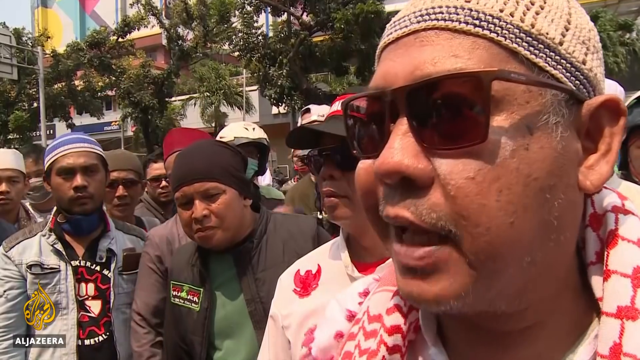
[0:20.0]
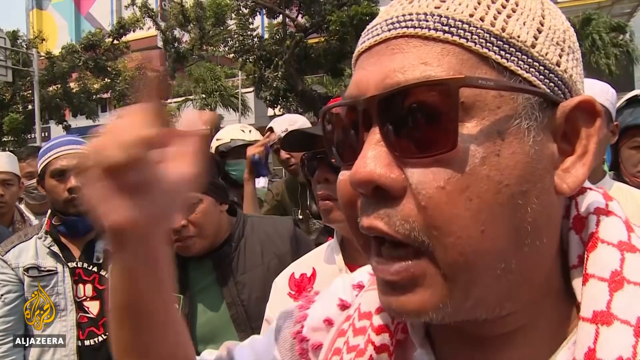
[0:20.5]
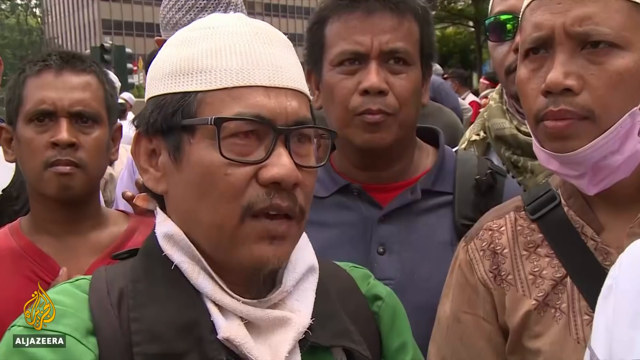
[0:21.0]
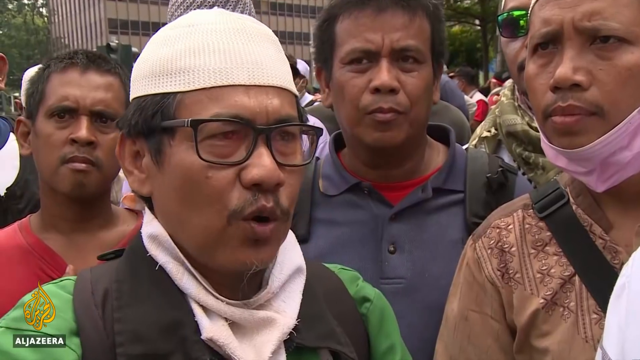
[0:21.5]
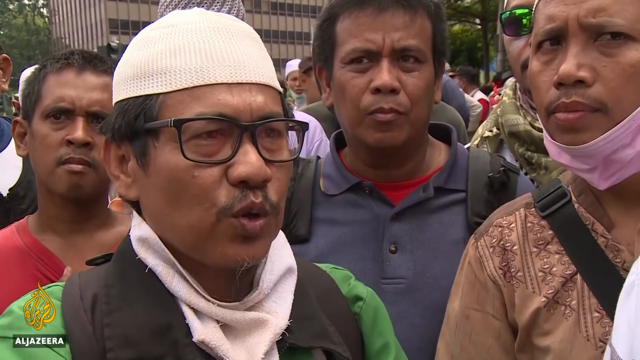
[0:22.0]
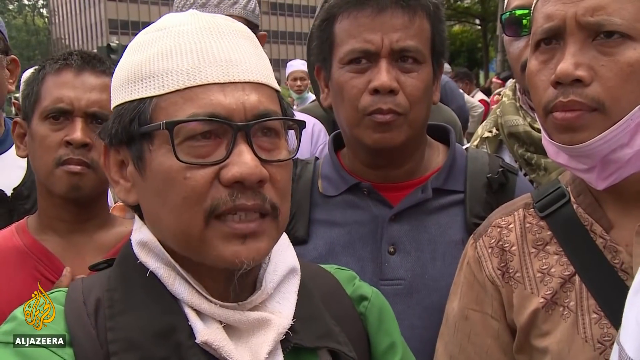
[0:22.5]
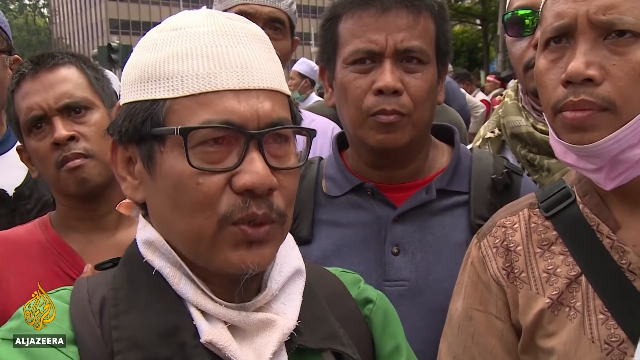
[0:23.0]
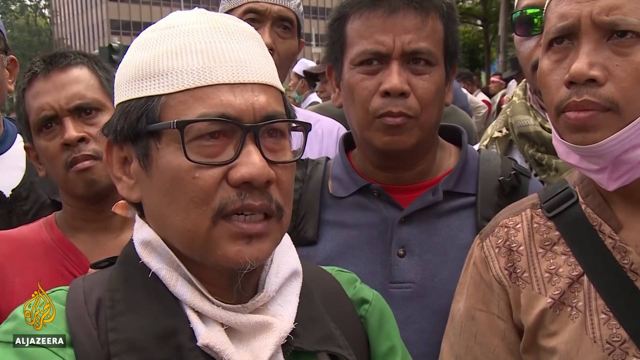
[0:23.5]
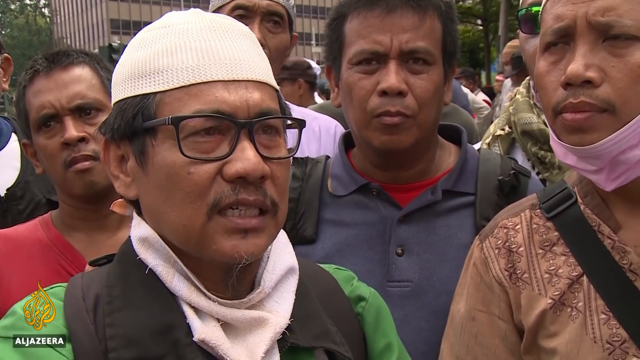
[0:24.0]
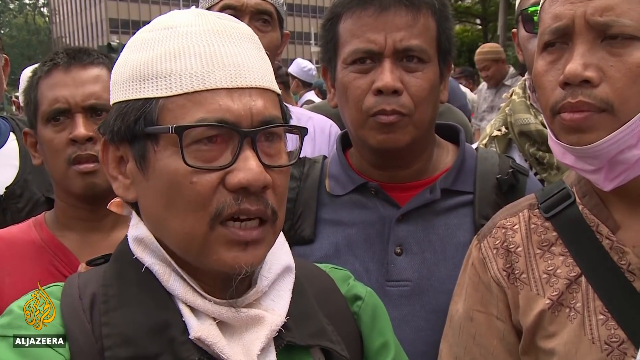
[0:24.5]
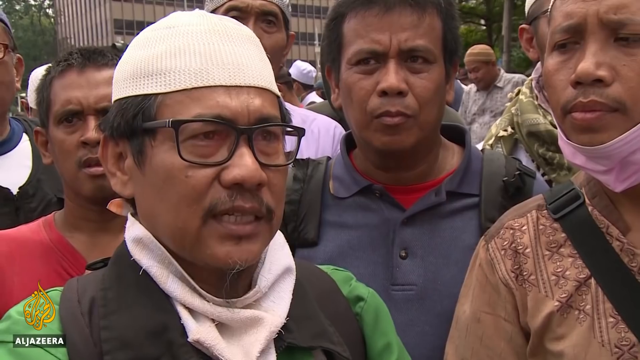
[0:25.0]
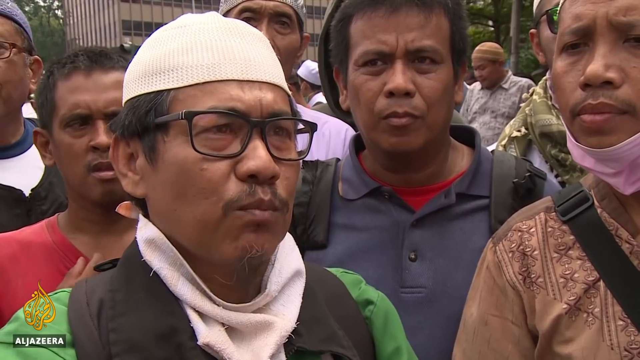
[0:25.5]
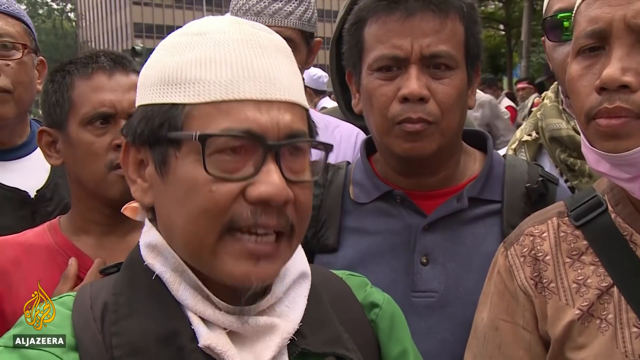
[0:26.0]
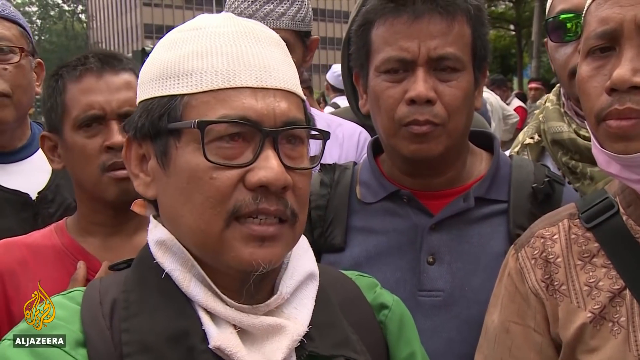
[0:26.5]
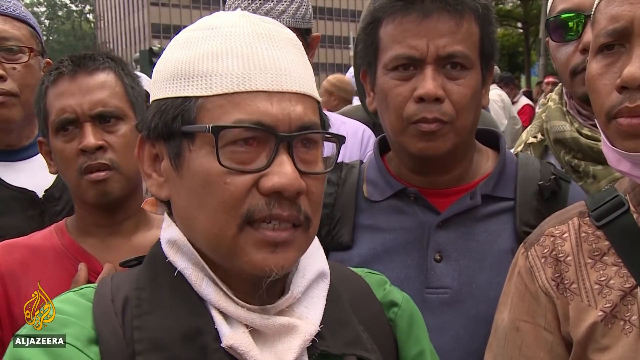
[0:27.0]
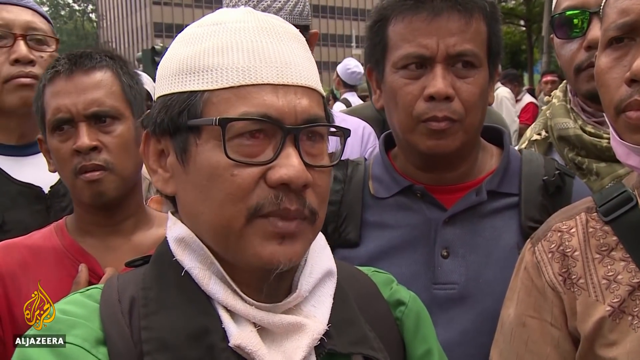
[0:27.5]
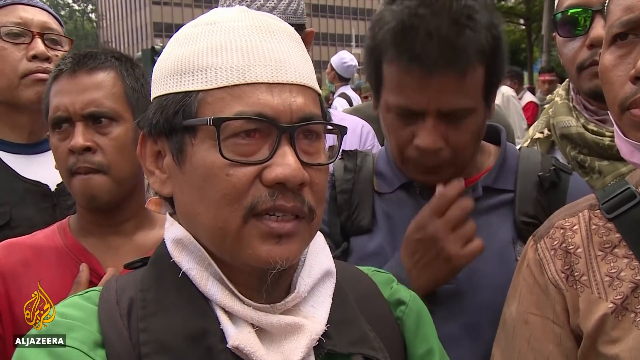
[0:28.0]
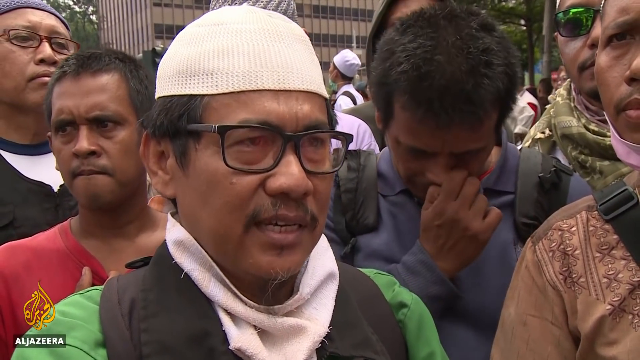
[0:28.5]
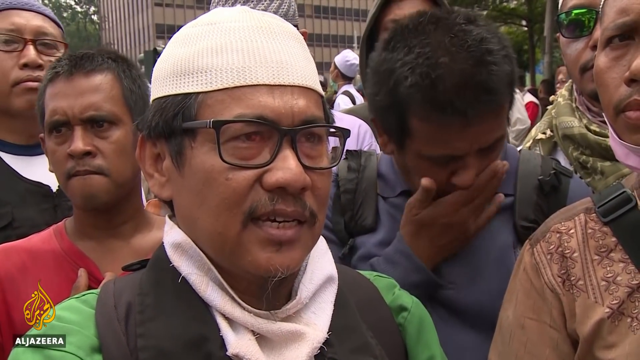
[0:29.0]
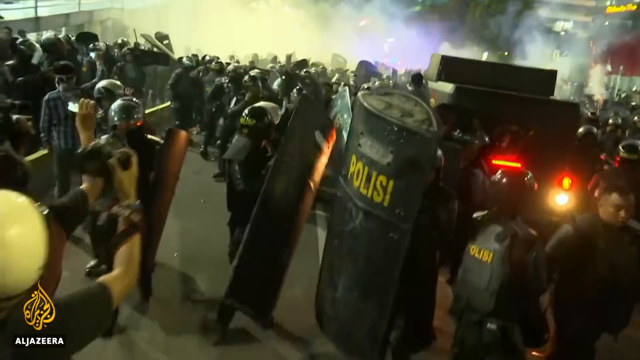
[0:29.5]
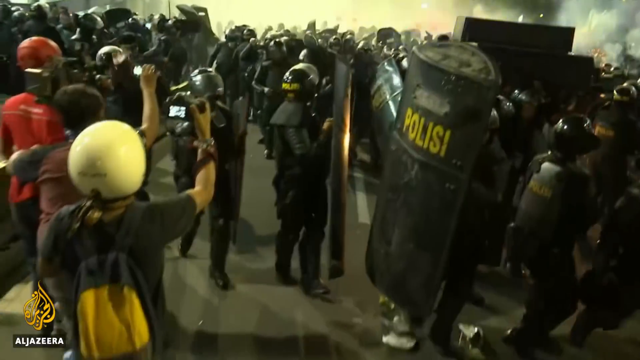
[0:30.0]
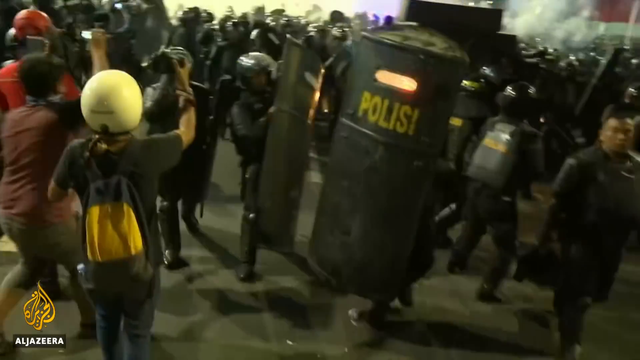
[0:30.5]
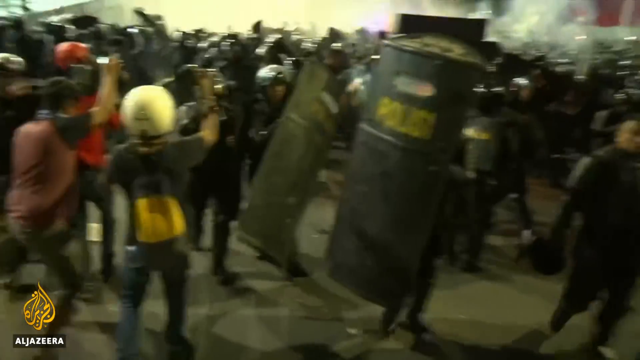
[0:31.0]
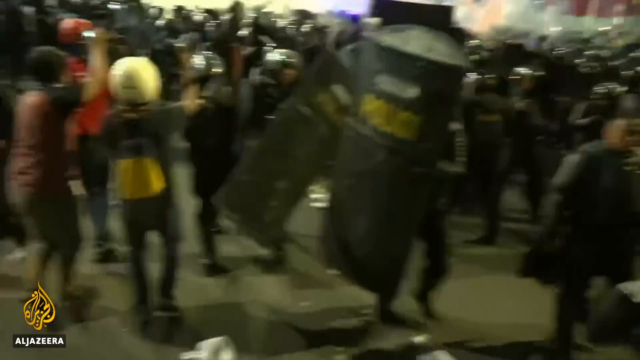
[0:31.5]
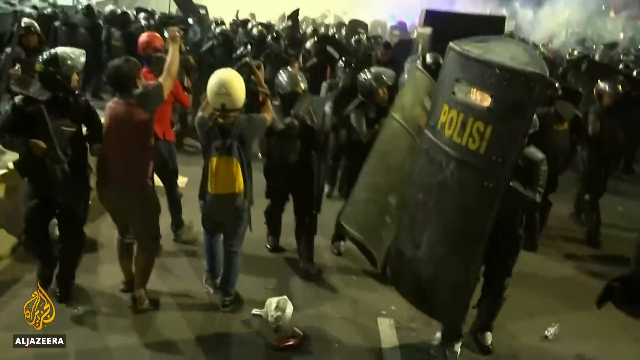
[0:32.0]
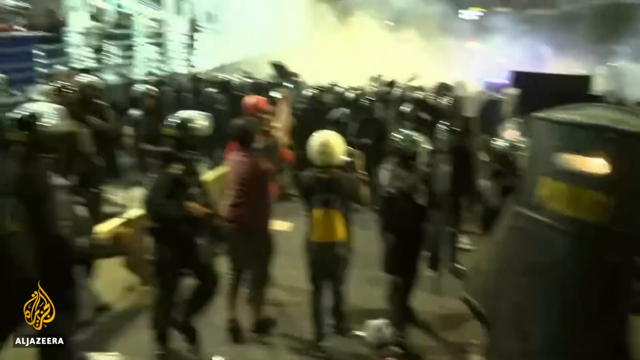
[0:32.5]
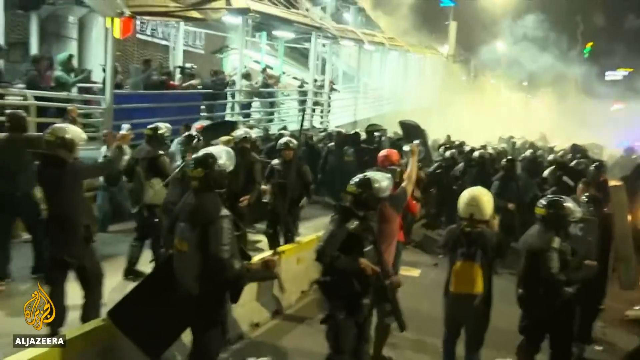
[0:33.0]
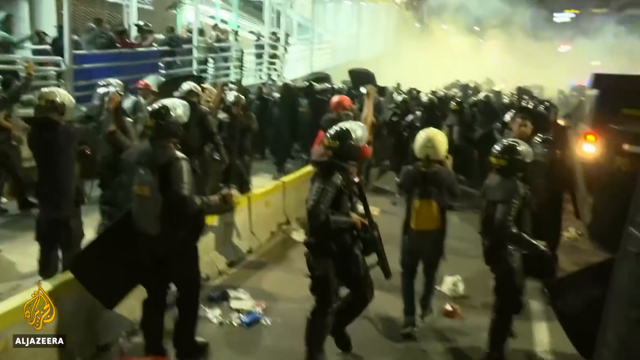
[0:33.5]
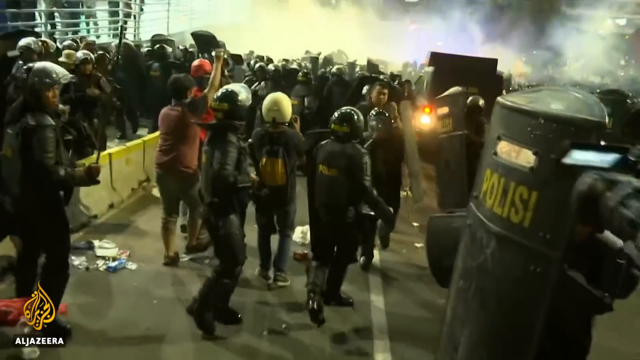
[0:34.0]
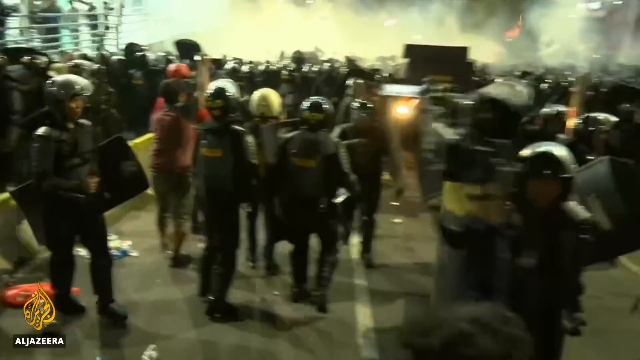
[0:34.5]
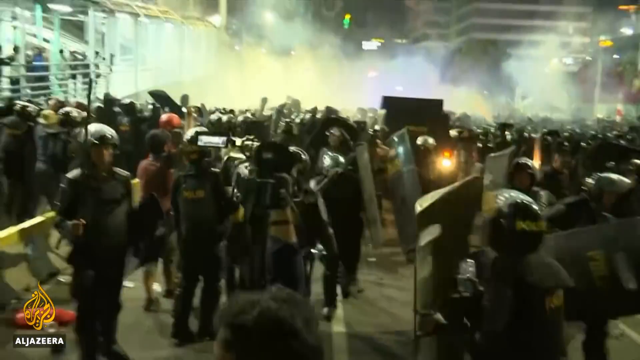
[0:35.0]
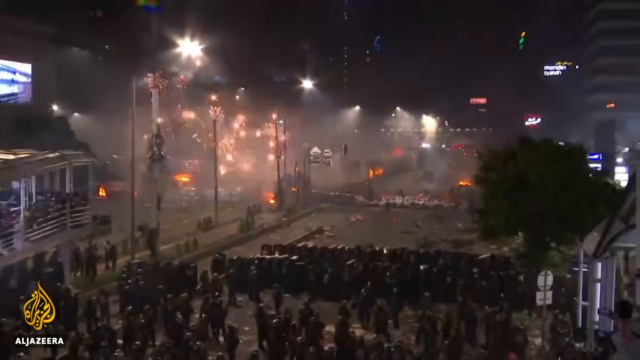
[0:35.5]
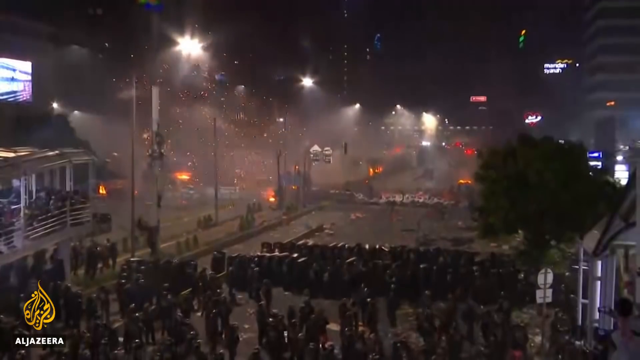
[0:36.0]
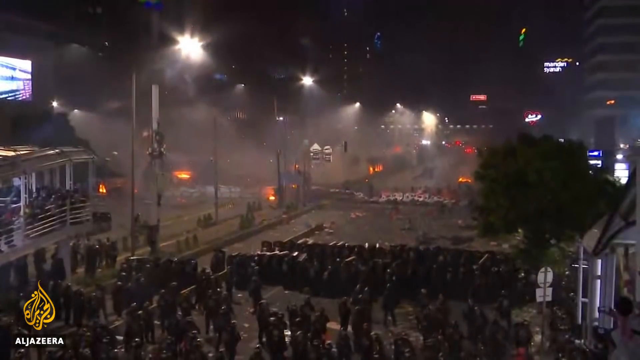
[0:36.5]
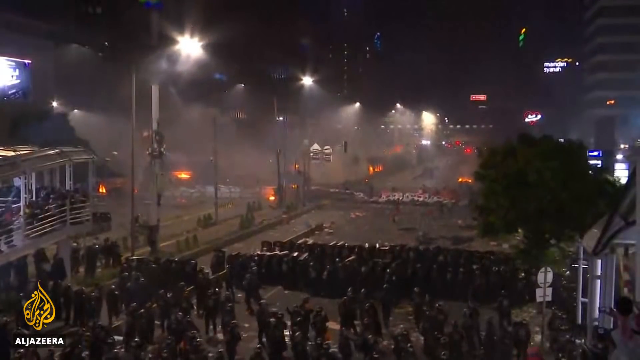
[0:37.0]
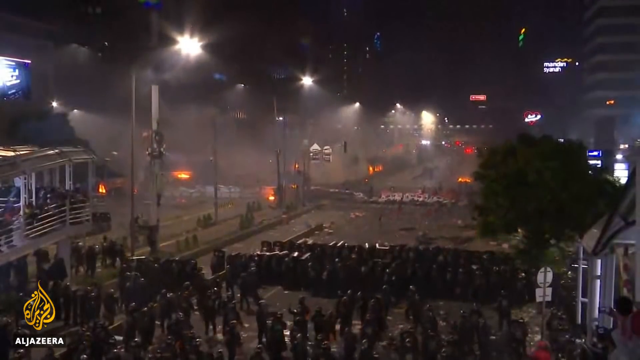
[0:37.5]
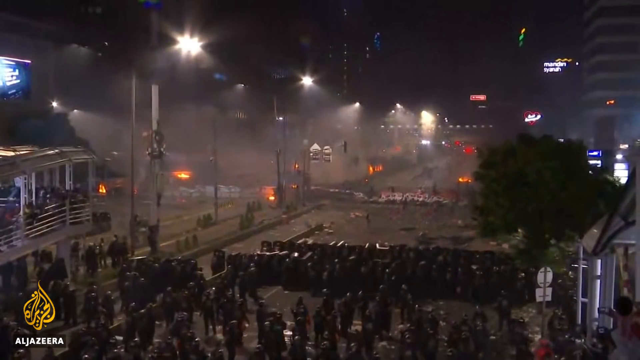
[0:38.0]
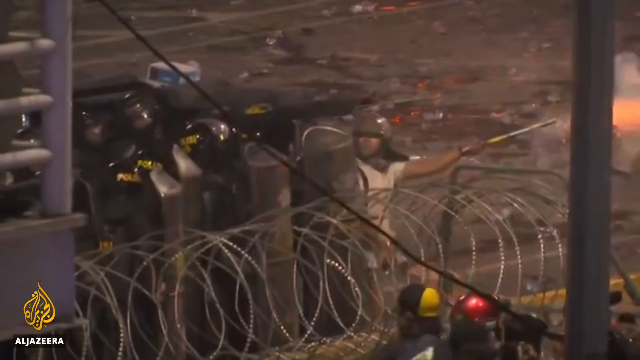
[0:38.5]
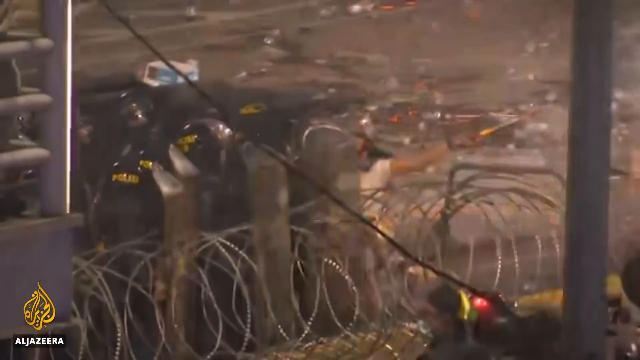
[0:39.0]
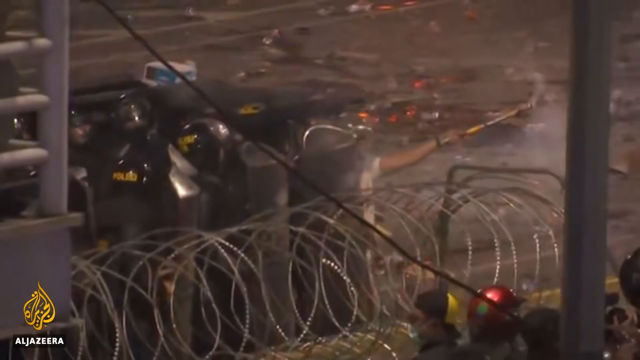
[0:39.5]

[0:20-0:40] People on the ground in Indonesia talk to a reporter in a broadcast from Algeria TV; they seem fairly calm. Then a riot breaks out on the street at night, and it is very dark. The police are involved, and the crowd appears to be pushing them back. People throw things, including at the police, and burn things; it is pandemonium. The police are present in great numbers and carry shields, and yellow barriers have been set up. Explosives are visible in the distance. One person holds out their left arm with a stick in it that looks like it may be for lighting an explosive.